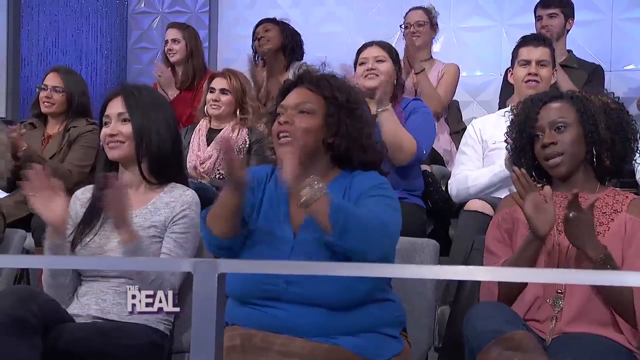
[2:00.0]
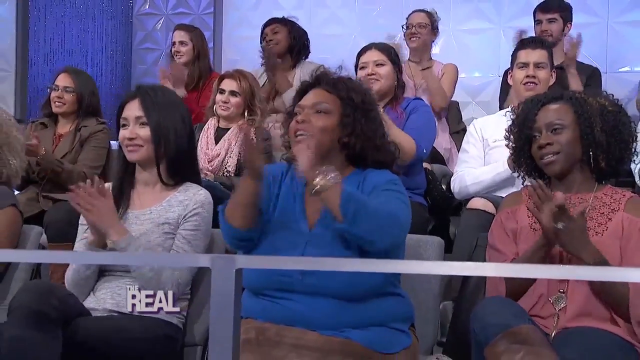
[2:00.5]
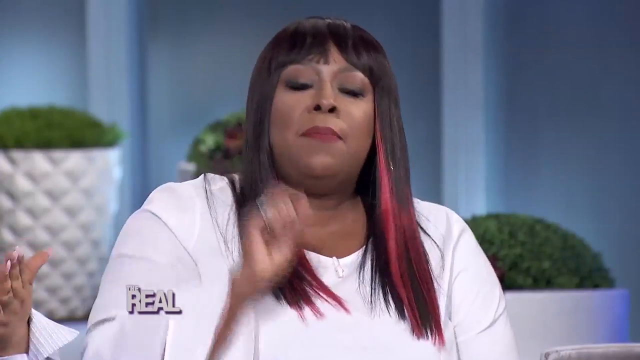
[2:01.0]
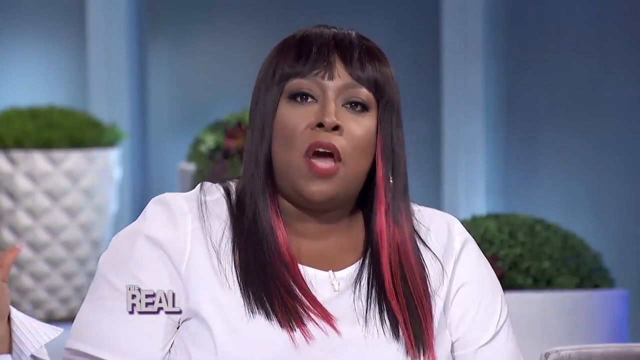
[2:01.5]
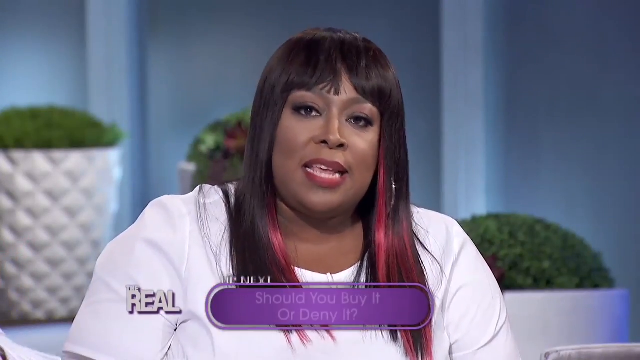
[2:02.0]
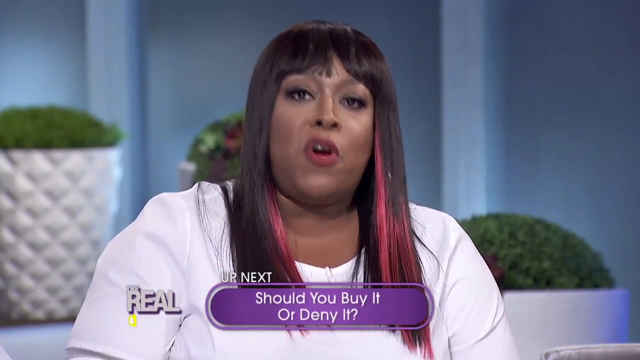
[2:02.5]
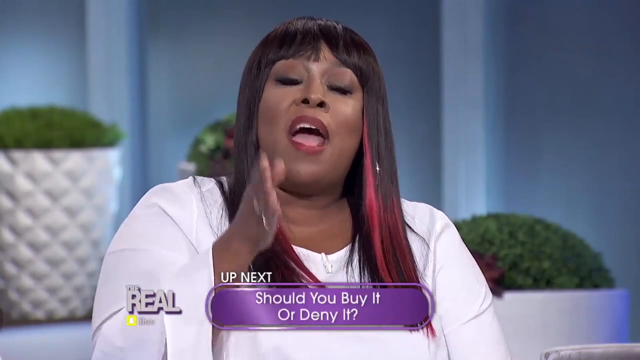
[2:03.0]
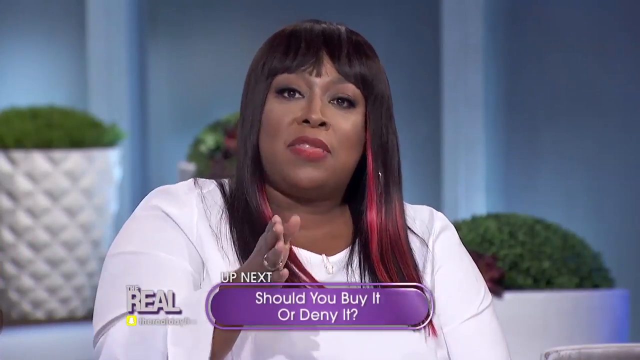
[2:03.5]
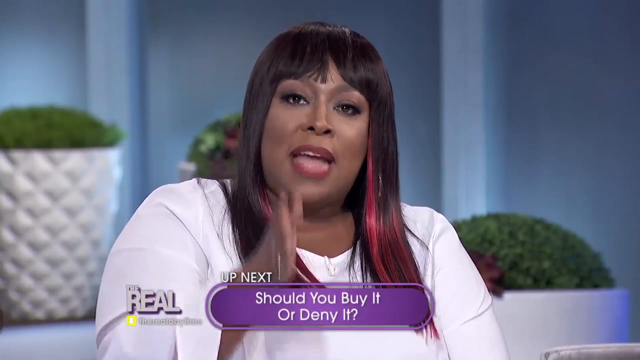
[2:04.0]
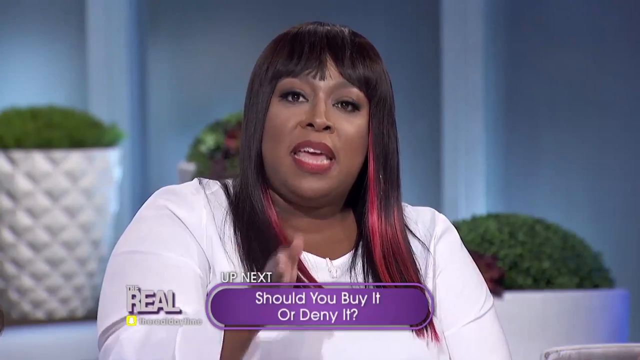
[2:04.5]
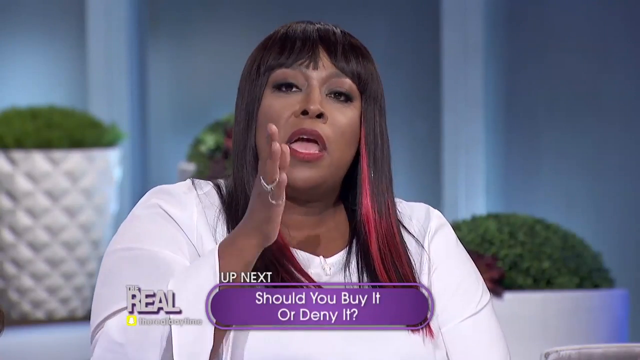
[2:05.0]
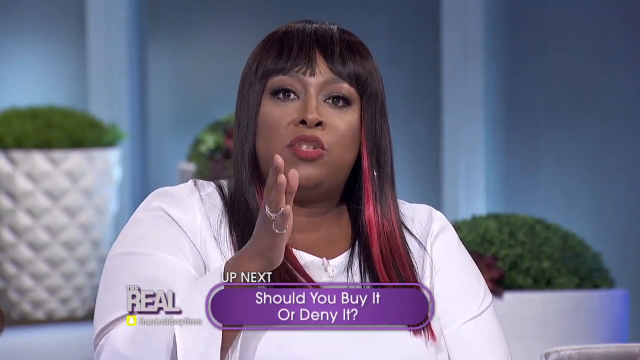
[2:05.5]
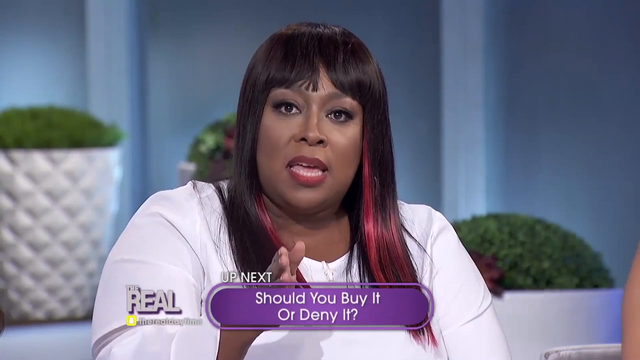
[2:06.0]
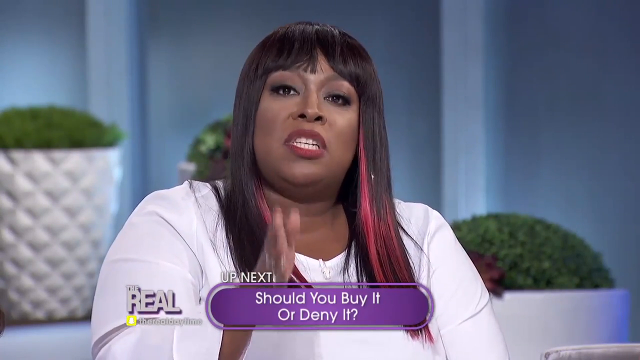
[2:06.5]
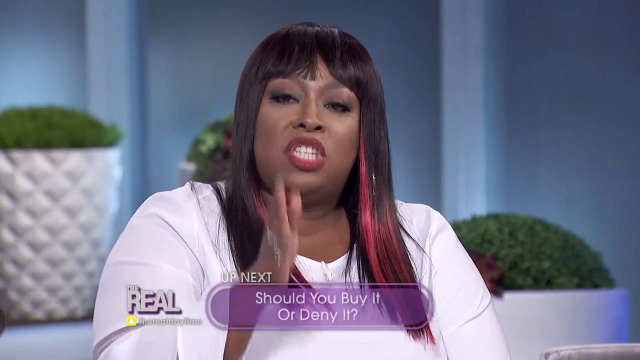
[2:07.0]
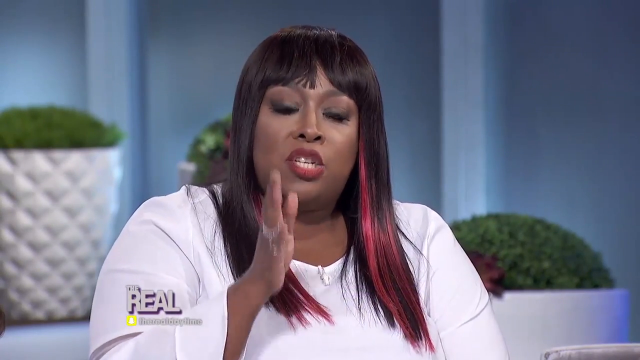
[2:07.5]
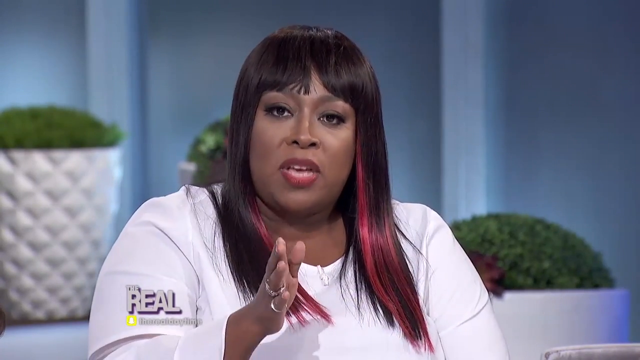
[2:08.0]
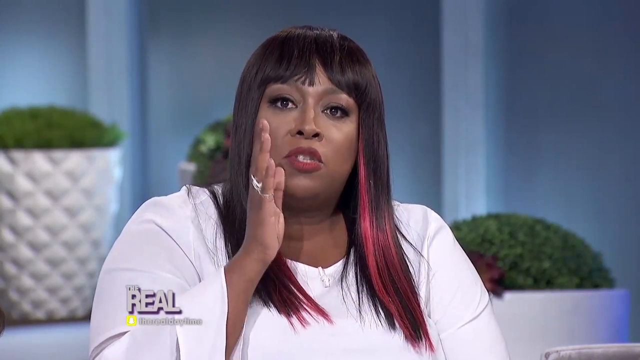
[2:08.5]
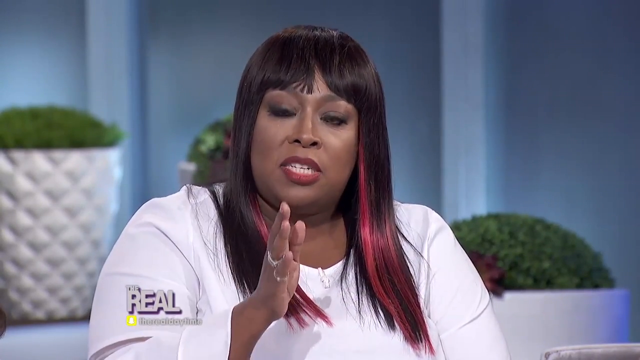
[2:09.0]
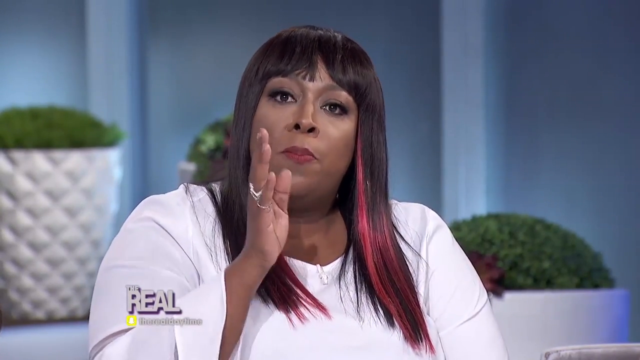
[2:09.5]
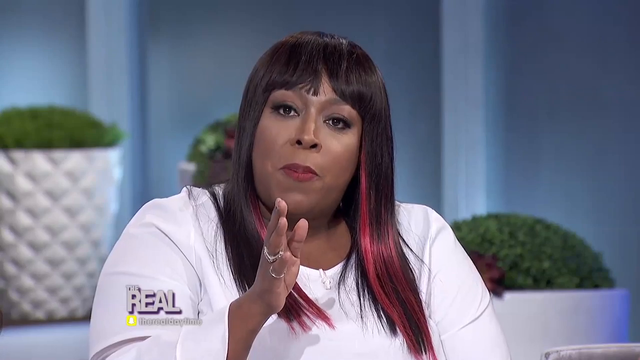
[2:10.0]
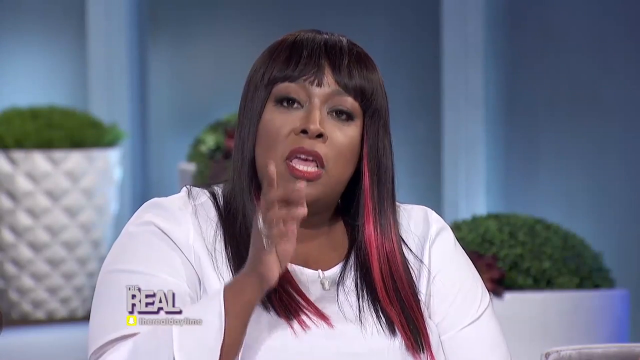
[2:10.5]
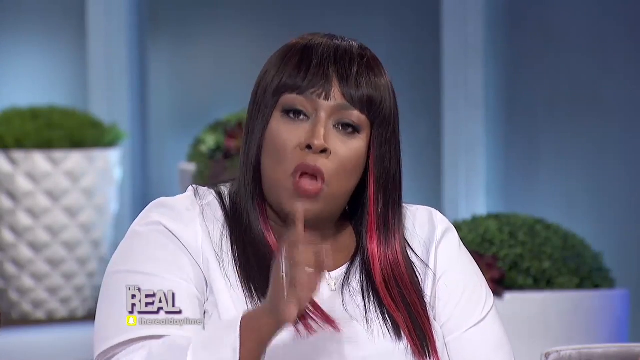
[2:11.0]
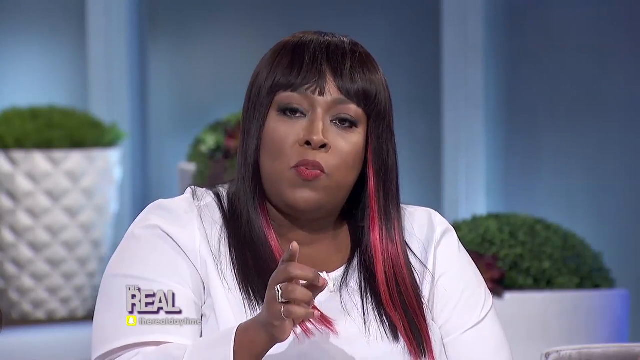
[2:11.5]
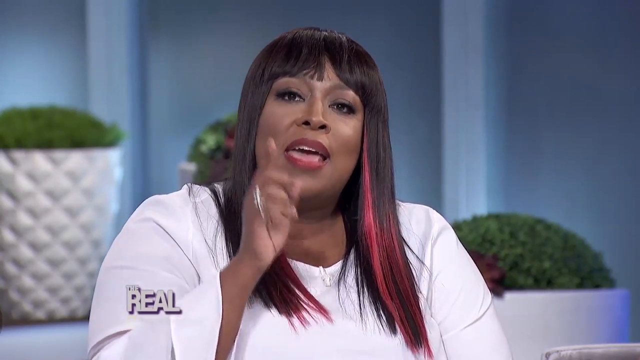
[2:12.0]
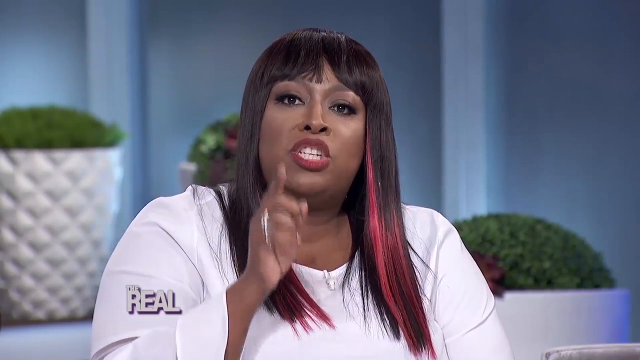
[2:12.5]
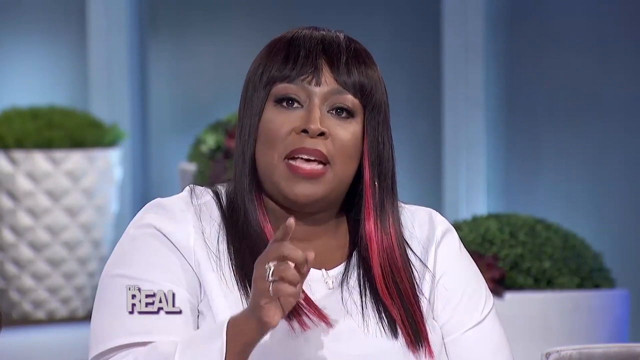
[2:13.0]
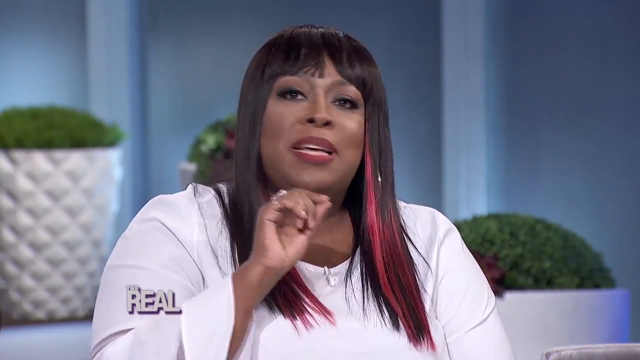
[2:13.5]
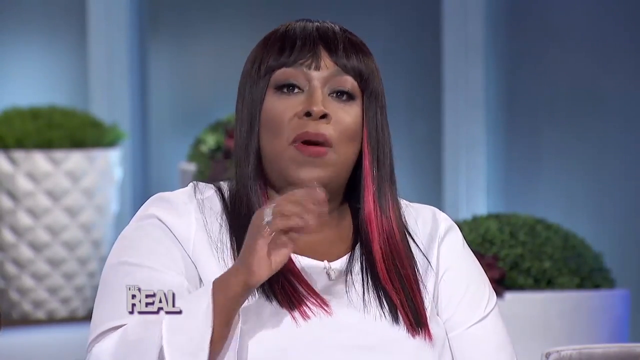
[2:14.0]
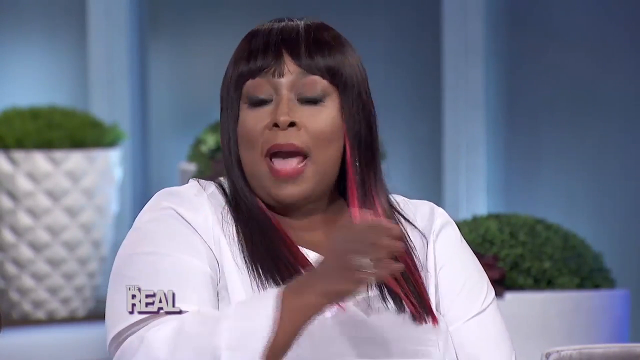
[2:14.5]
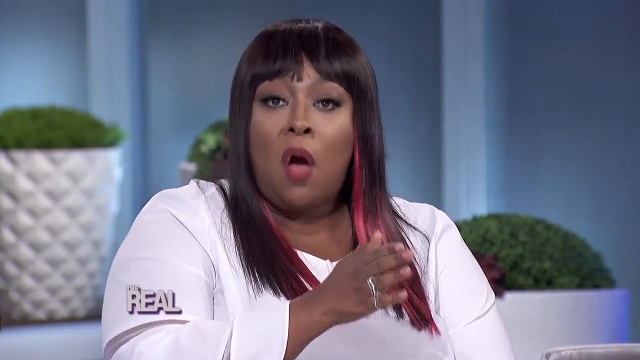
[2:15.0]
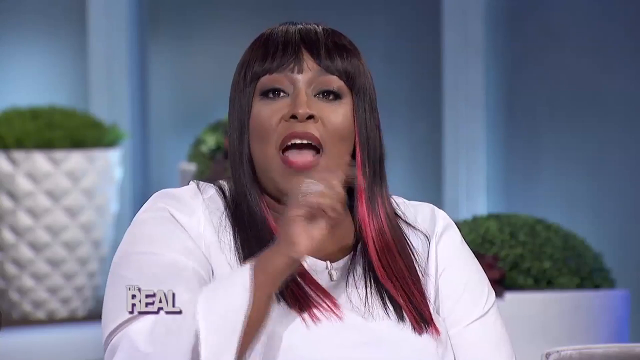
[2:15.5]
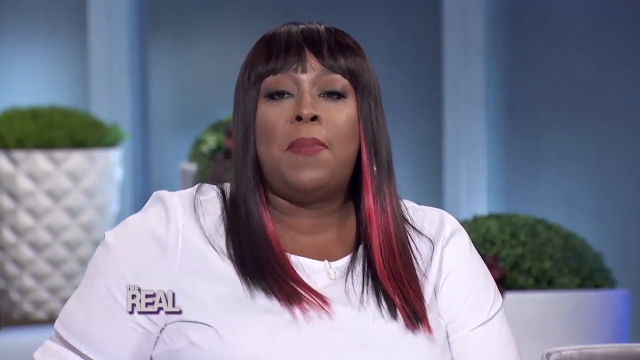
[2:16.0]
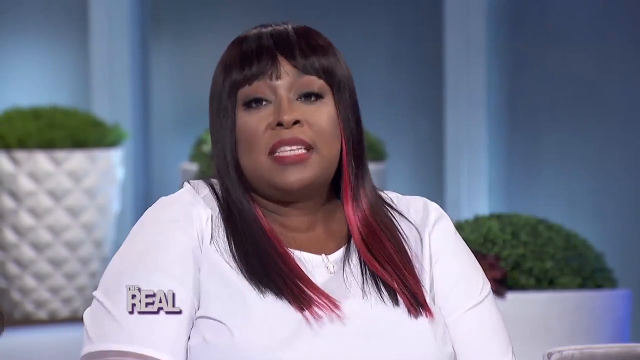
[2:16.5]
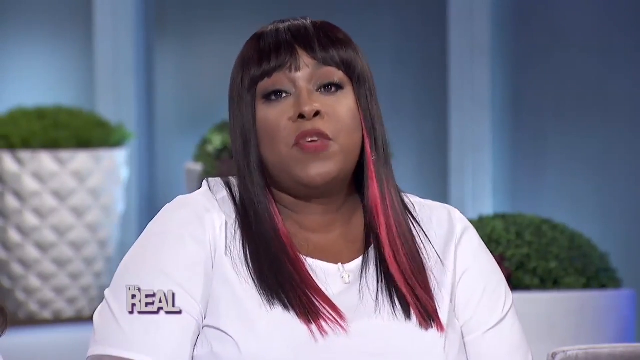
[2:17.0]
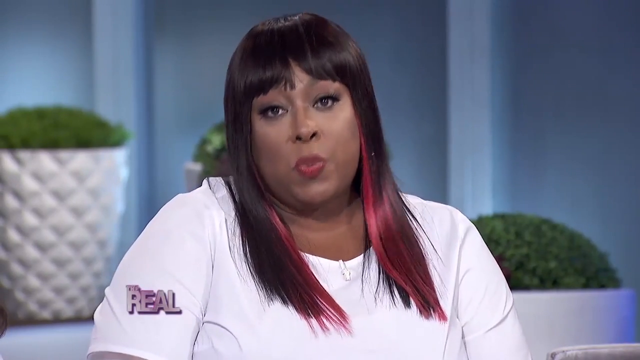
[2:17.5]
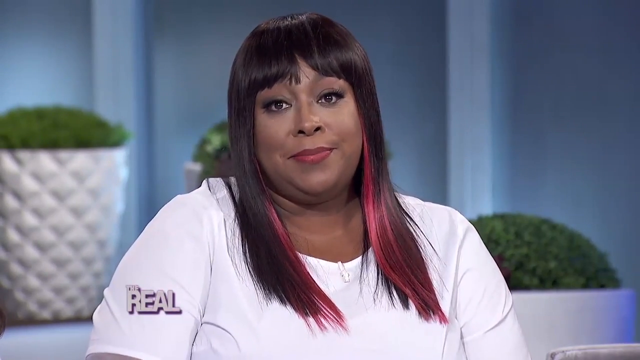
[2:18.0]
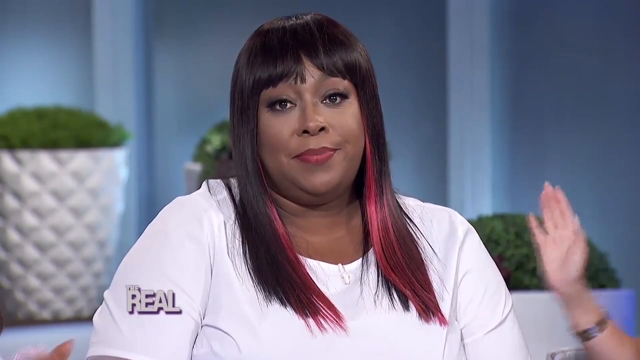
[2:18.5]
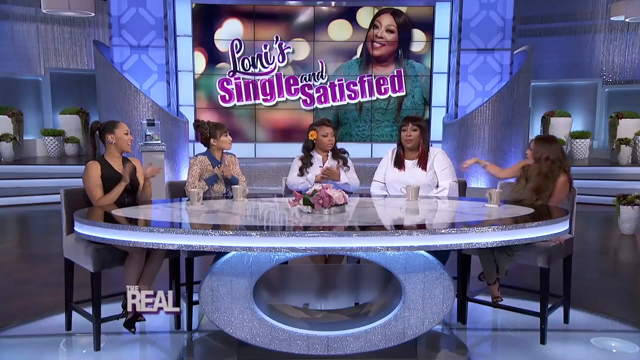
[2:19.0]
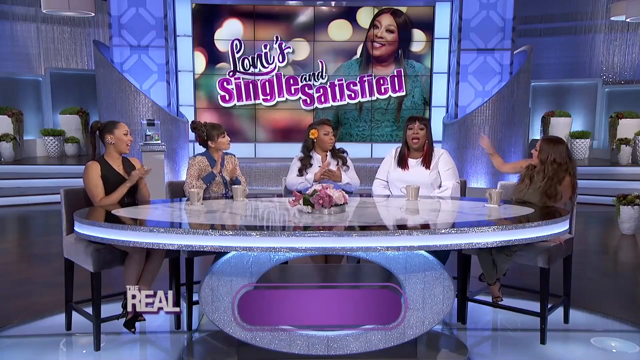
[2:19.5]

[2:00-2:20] The people in the audience are clapping. The camera shows the woman with straight black hair and pink highlights speaking animatedly toward the camera. She lifts her hand with her fingers kind of all in line, her palm sort of facing her left, and kind of points toward the camera with that hand as she speaks. She appears to kind of raise her hand up and down, almost as if punctuating what she is saying, with a very kind of serious expression, and continues to use her hand to punctuate. At one point she sort of curls her pinky, ring and index fingers and kind of makes a pointing finger at the camera. Her fingers then open again so her hand is straight, and she kind of slides it to her left as if saying "move over", while speaking to the camera. A hand comes in from the right side of the frame and kind of pushes her shoulder. All five women at the table are then shown, and three of them begin to clap.